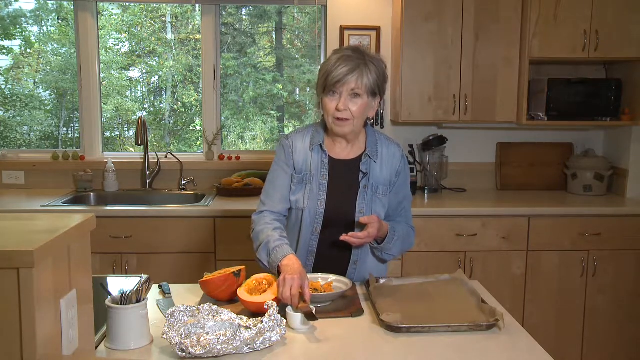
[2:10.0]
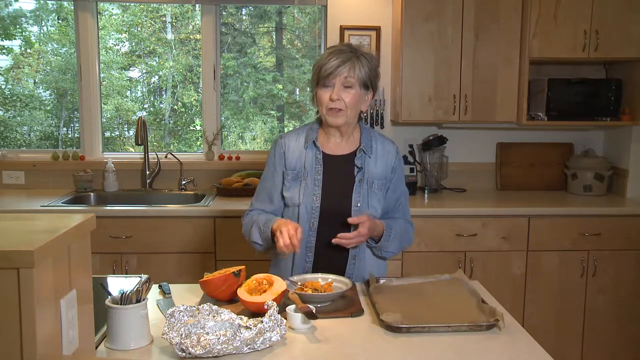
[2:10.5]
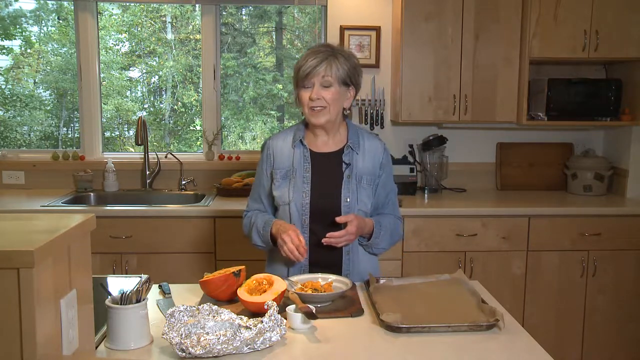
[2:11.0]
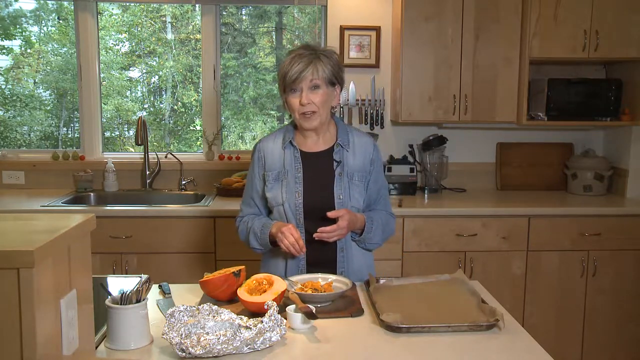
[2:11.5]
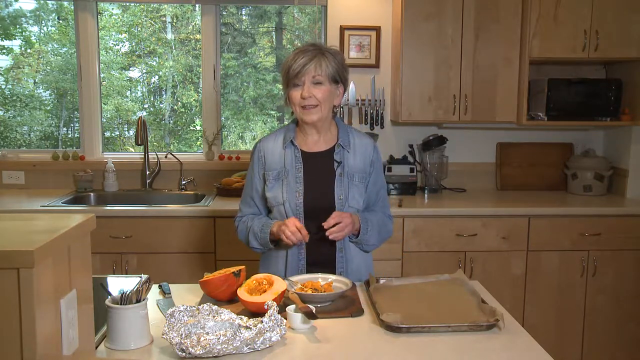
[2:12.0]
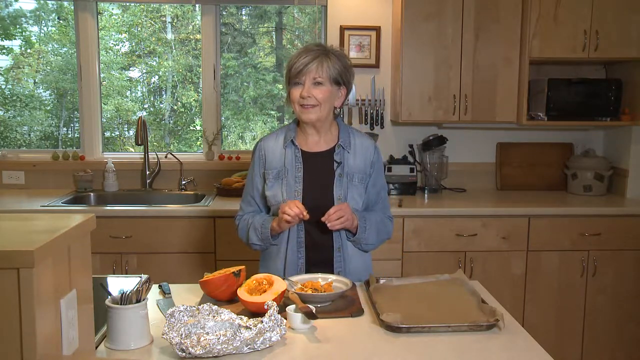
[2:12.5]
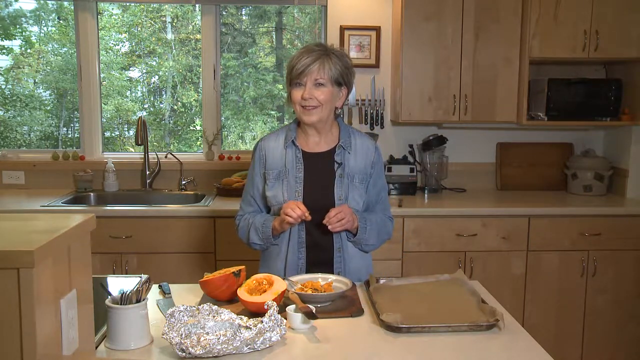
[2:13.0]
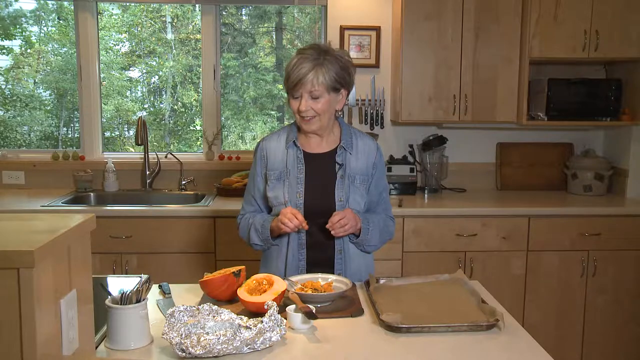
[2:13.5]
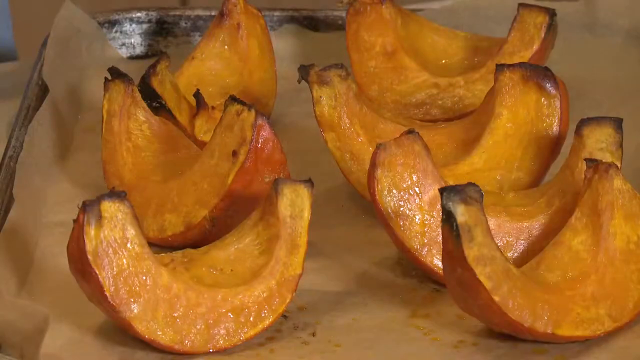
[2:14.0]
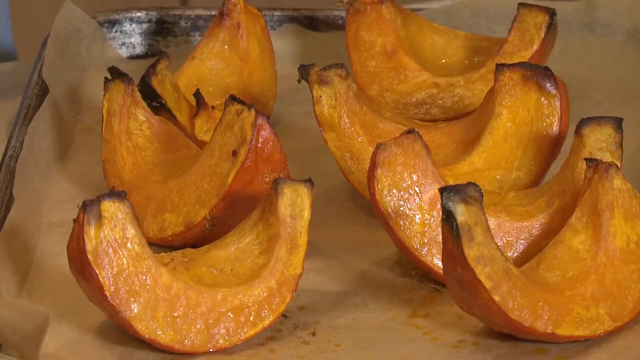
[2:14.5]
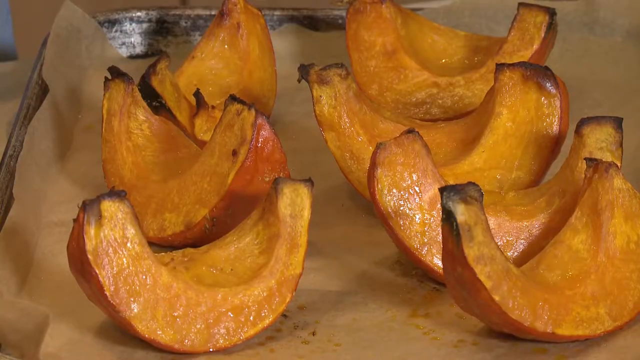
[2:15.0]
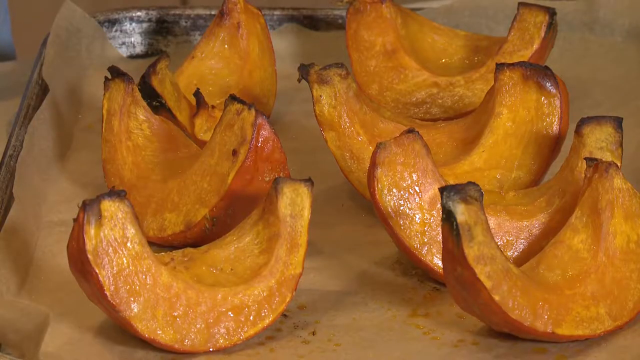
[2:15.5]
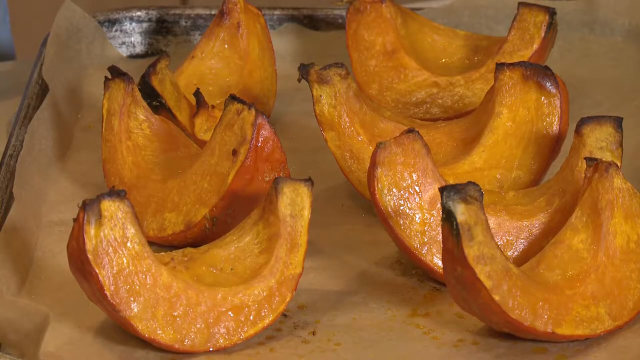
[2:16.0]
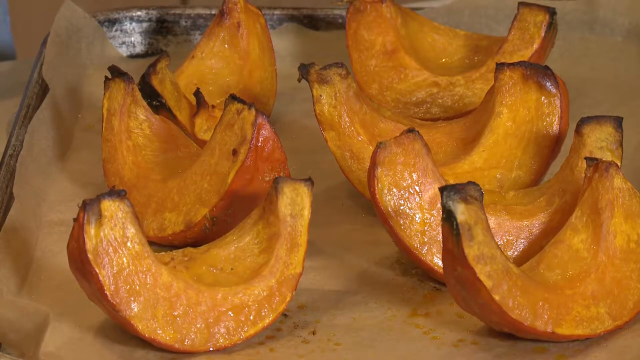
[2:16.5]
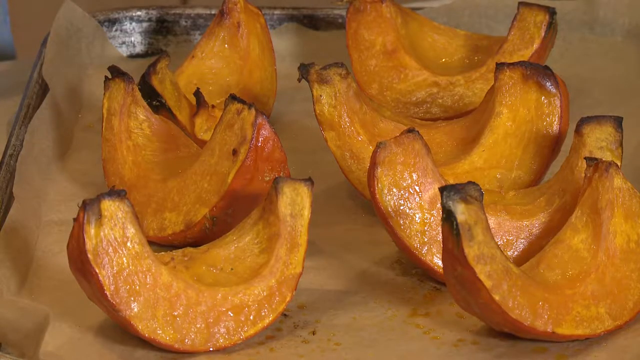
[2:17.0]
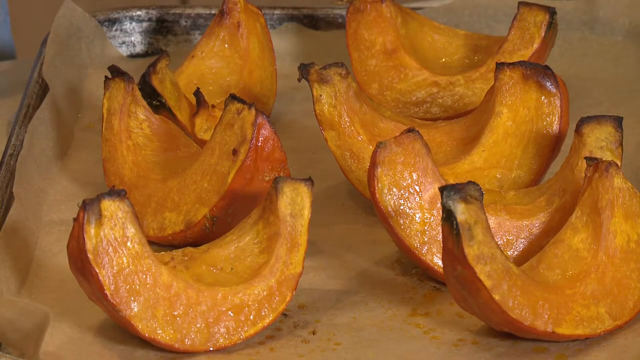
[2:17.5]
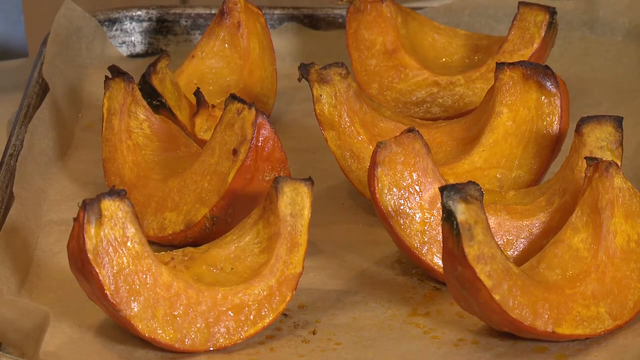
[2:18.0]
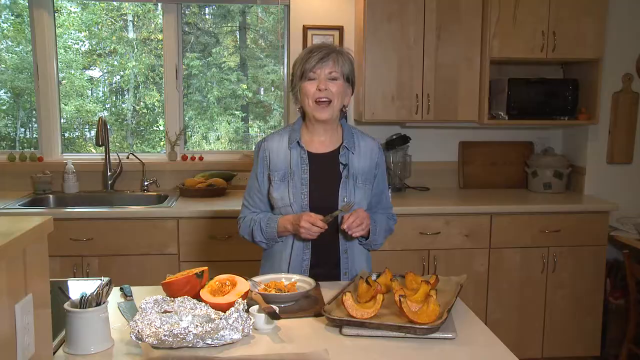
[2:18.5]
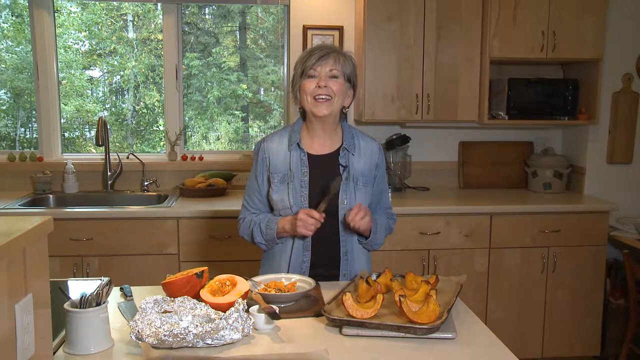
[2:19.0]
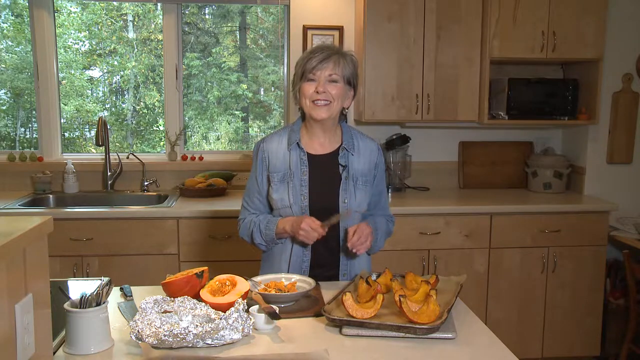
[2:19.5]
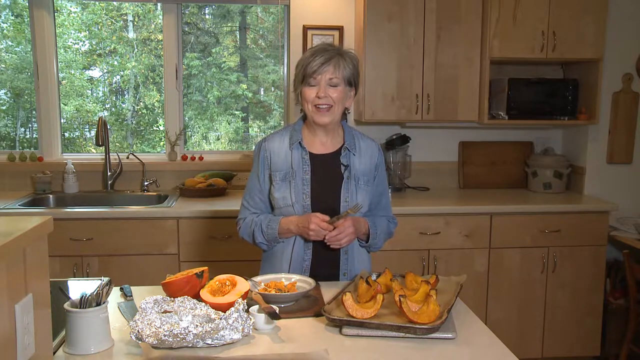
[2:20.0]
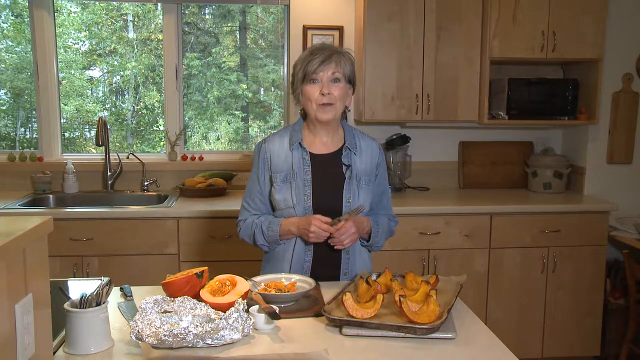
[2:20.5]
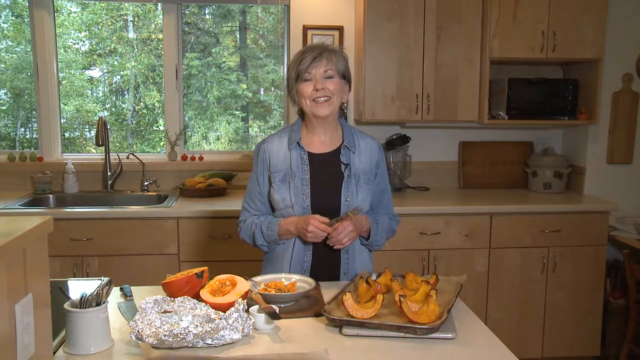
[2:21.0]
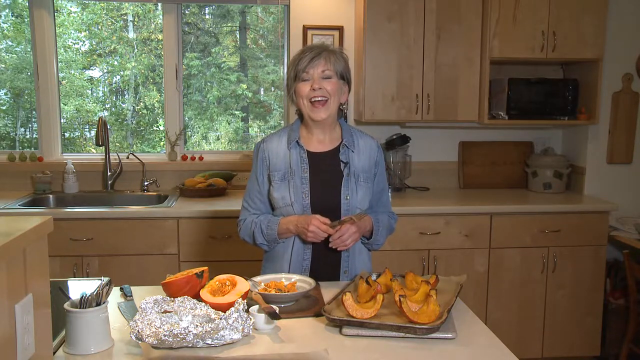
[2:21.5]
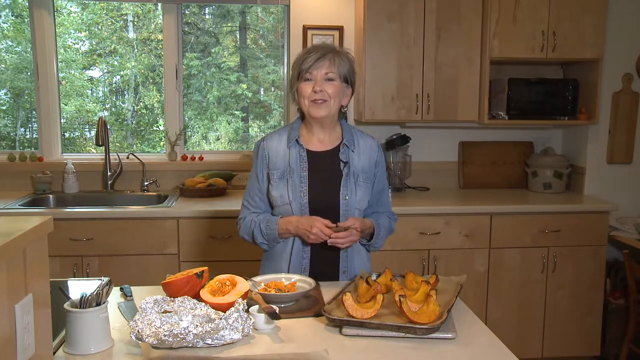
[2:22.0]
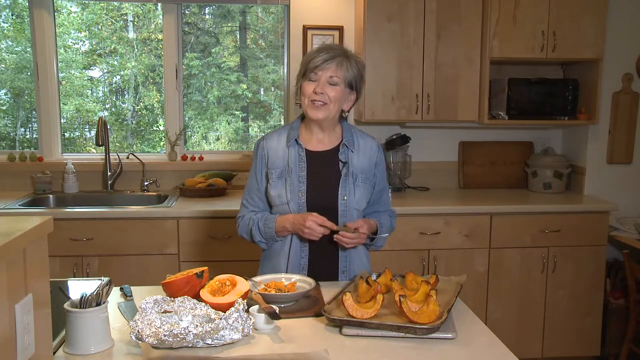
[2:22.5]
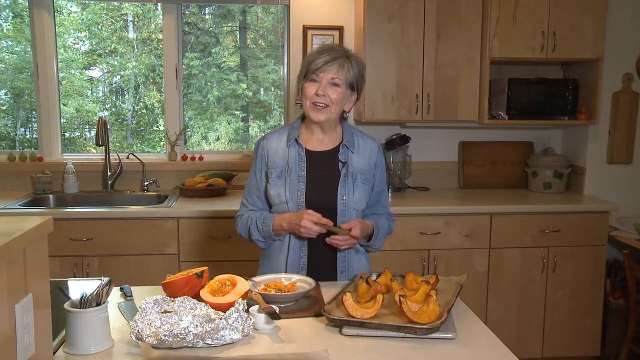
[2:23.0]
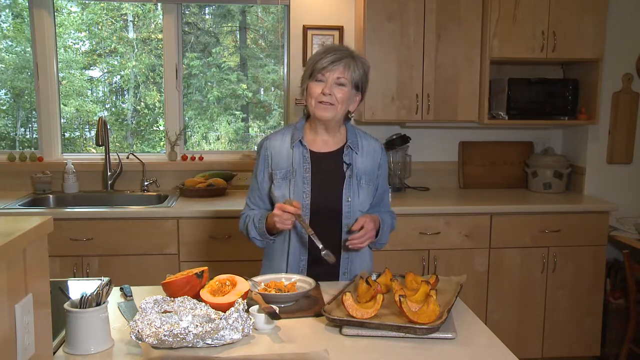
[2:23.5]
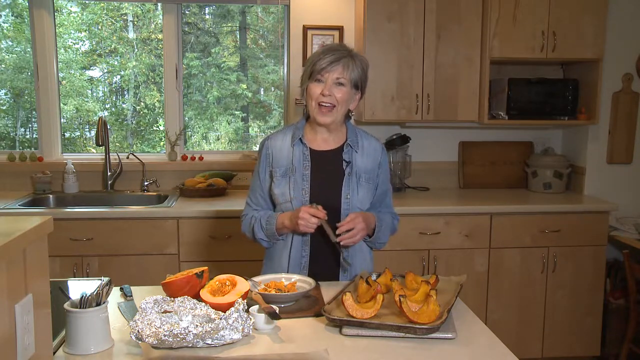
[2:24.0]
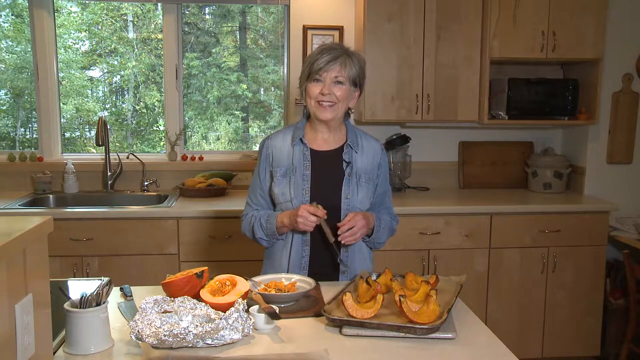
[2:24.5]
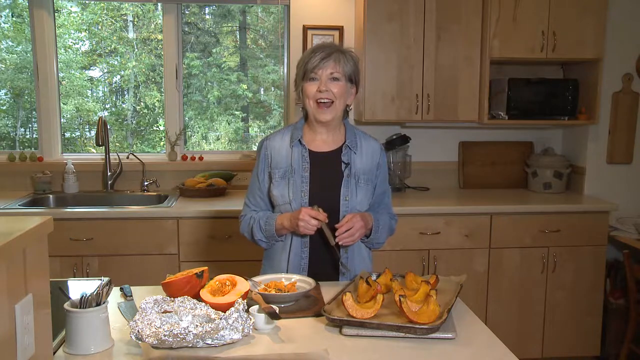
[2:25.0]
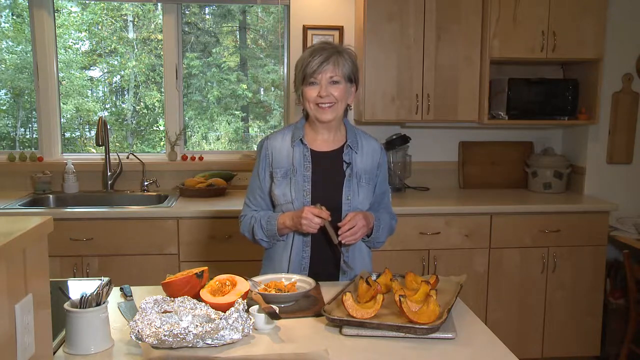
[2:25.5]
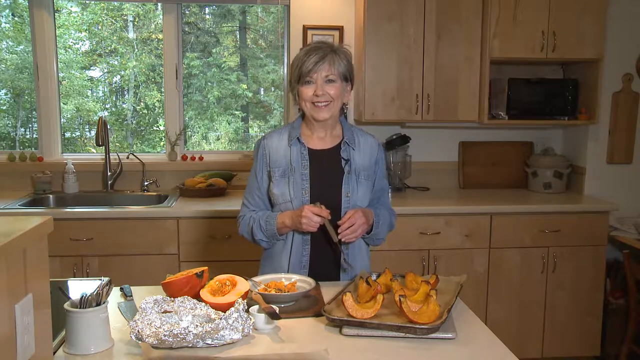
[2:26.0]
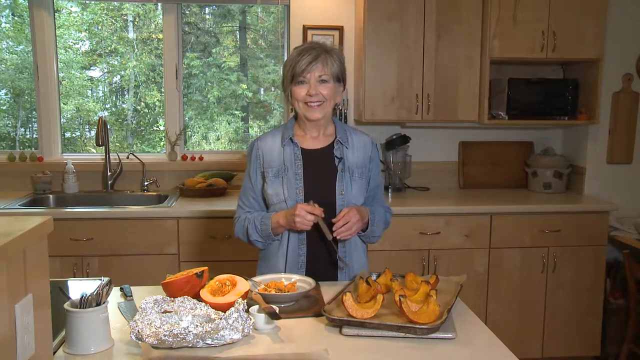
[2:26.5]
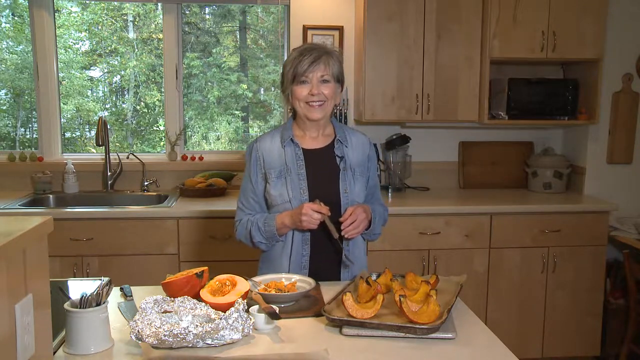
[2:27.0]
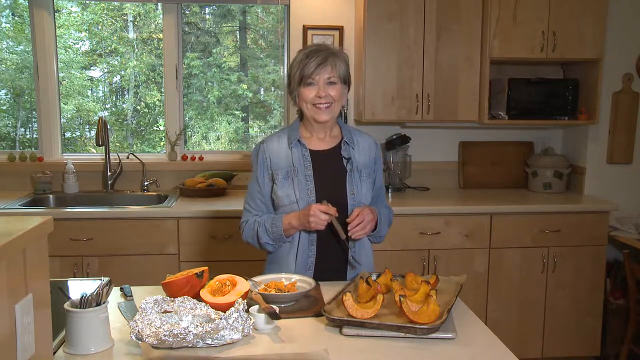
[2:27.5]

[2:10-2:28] The camera pans over to show roasted pumpkins on the parchment paper on the pan that was next to the cutting board. They are in sections, about seven pieces, apparently the halves of two pumpkins, cut in quarters. They look nicely roasted and are a little brownish near the ends. The camera then pans back to show the whole table and the woman, and the pumpkin on the cutting board is still split open; apparently another pumpkin was used to show the final result.